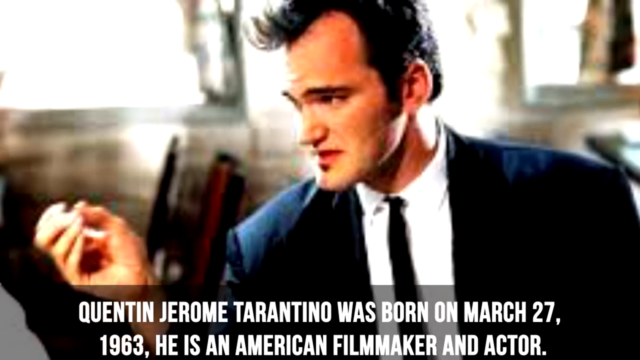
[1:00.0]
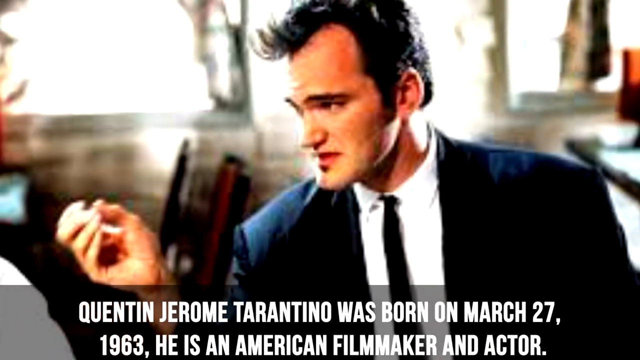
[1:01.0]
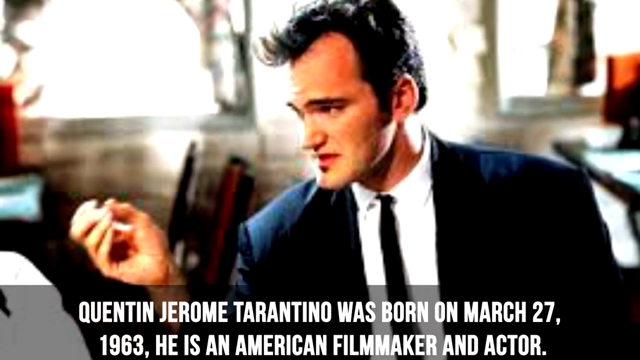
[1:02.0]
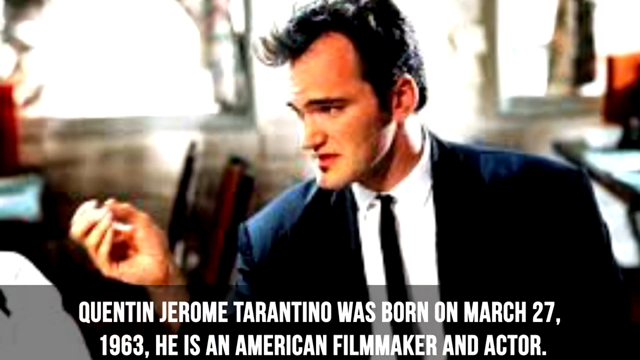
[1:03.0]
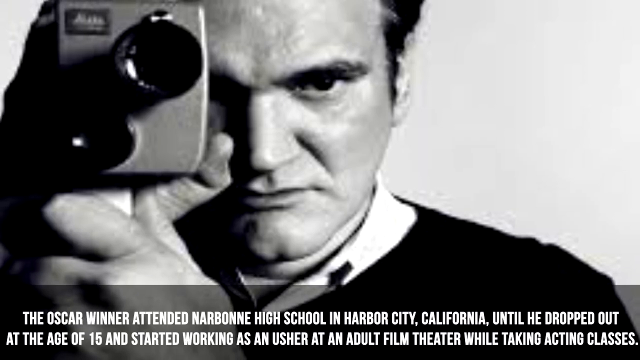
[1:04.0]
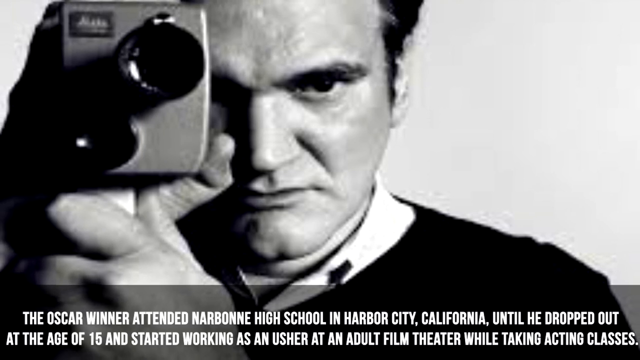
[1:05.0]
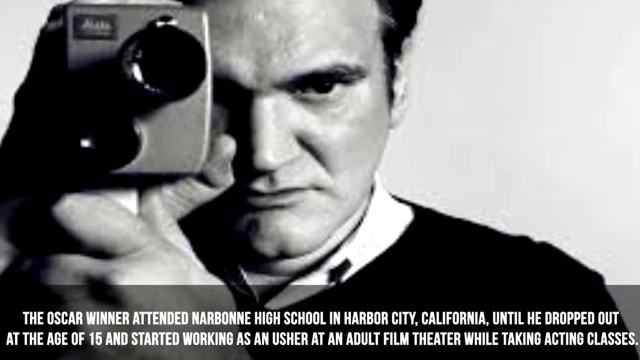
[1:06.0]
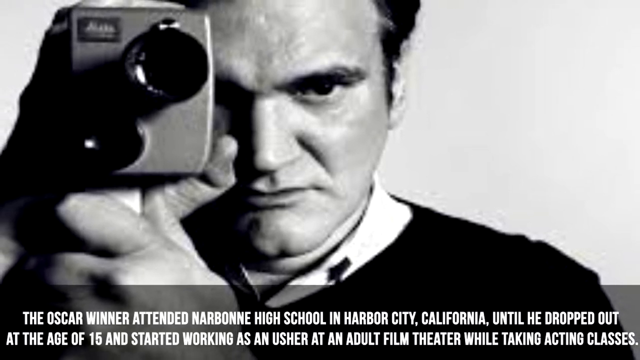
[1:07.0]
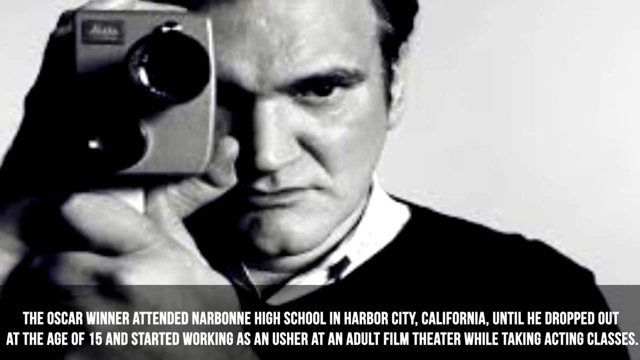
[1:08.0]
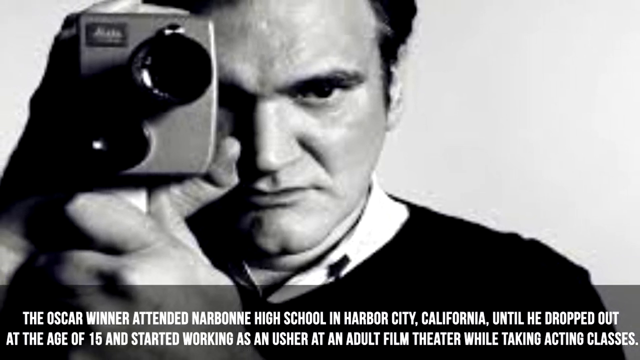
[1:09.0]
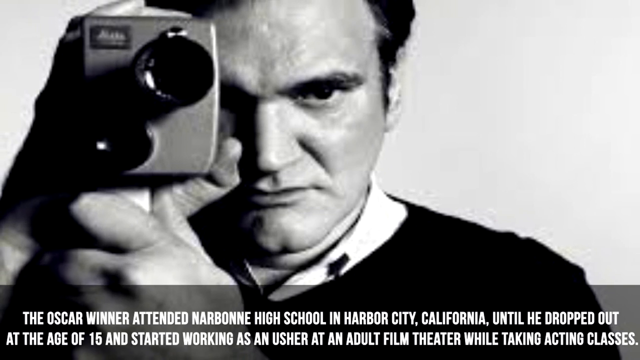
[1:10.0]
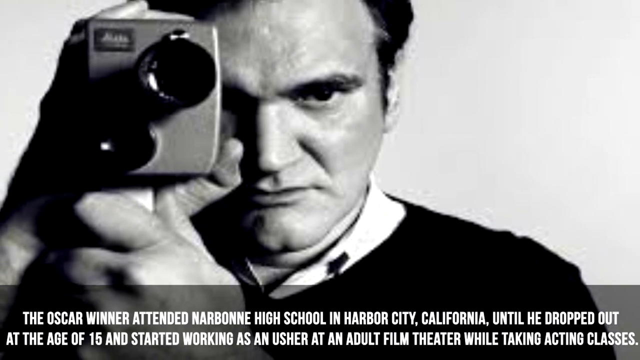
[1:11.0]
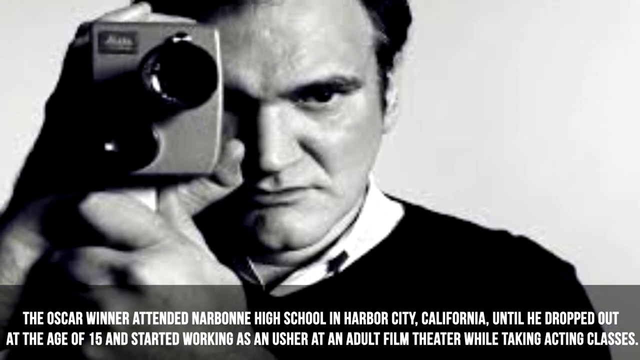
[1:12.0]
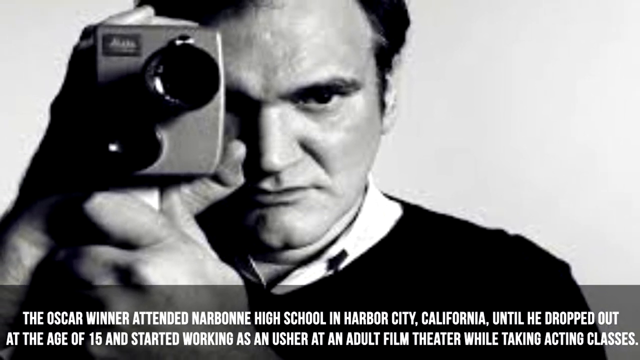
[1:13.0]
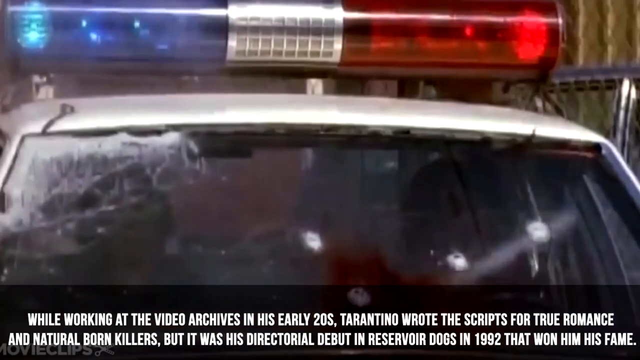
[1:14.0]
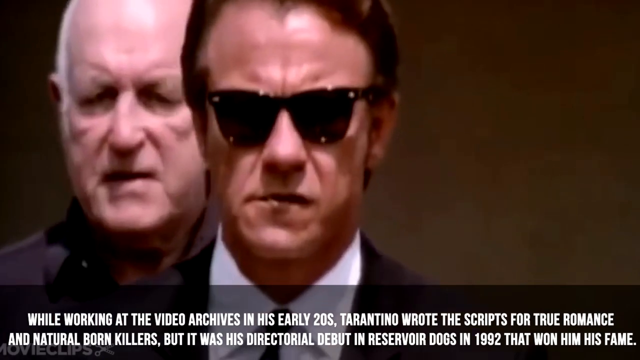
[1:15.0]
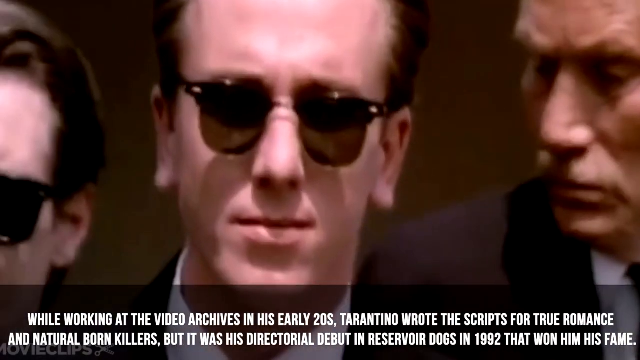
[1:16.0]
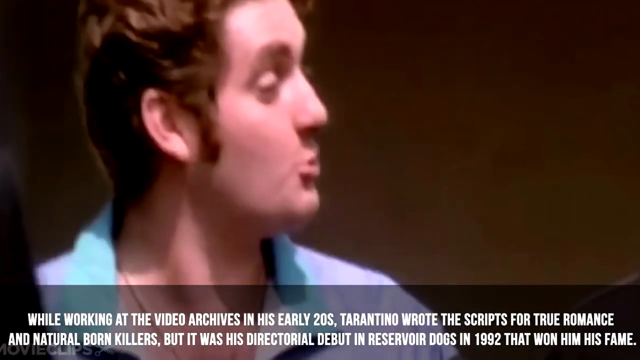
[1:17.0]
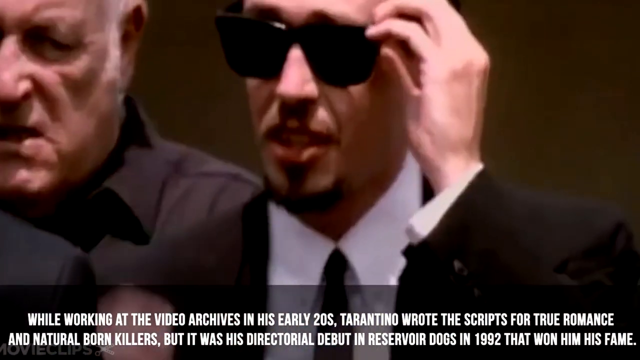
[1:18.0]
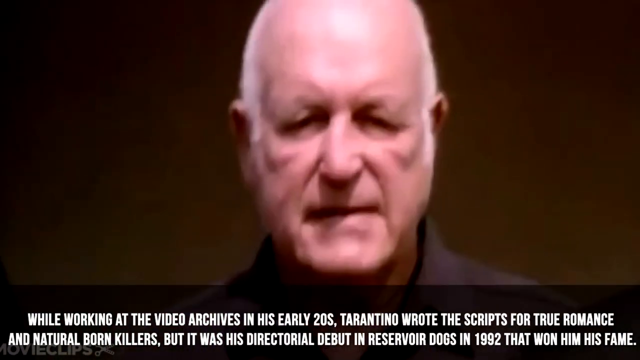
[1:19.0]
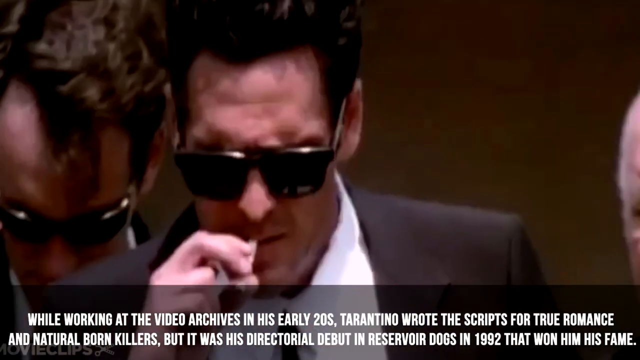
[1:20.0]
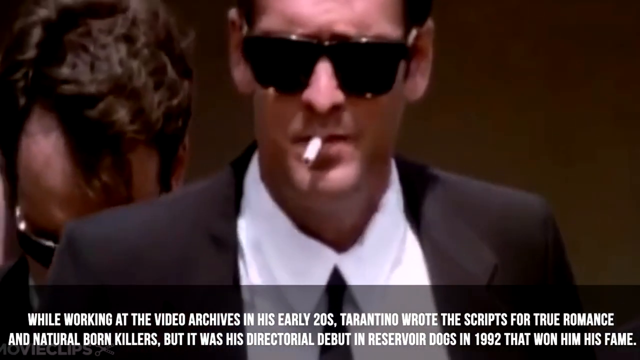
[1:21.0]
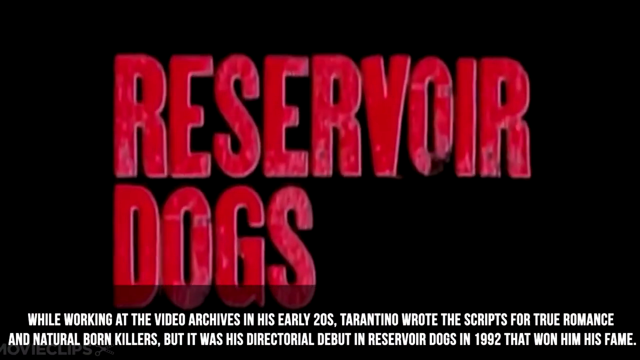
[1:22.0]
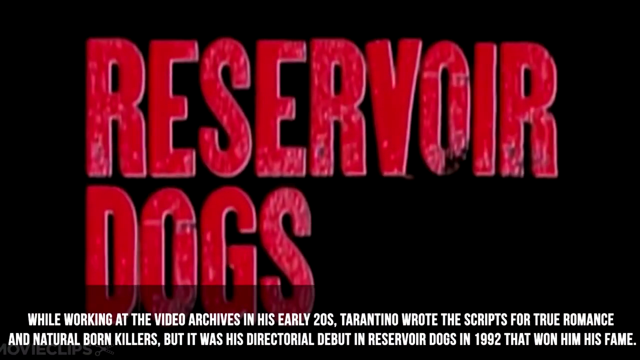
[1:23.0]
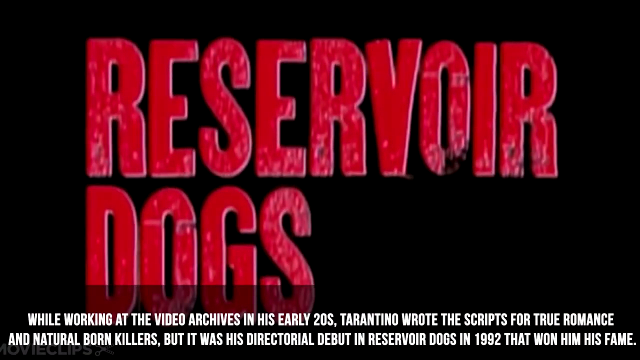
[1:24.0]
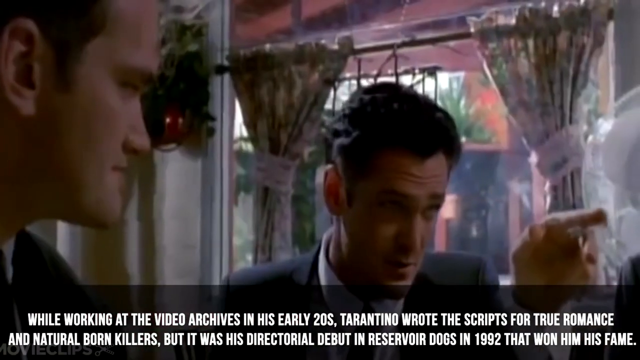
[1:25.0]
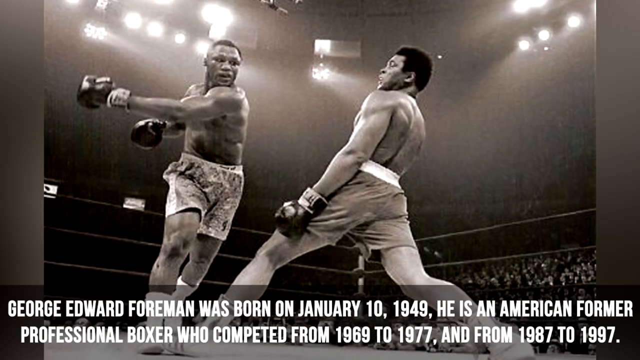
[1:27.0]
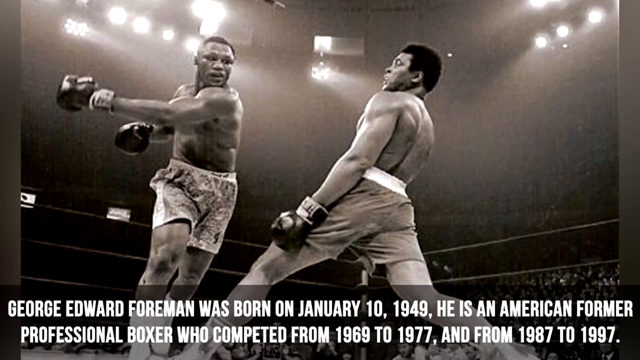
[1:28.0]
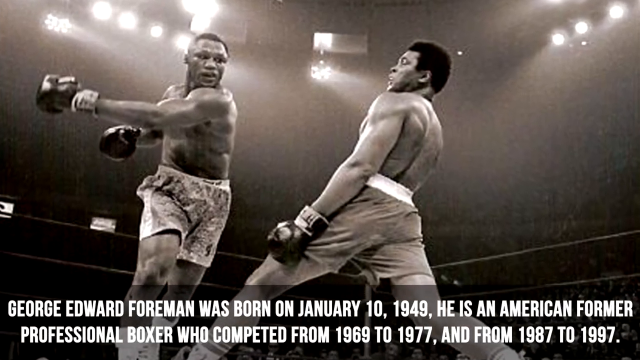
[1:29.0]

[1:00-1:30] Footage of Quentin Tarantino, either behind-the-scenes or from one of his movies, shows him in a suit, kind of looking toward his left. The bottom text says he was born March 27th, 1963, and is an American filmmaker and actor. The video cuts to a black-and-white photo of him looking very intently at the camera while holding up an old 8mm, or maybe 16mm, film camera. The text says he was an Oscar winner, attended a high school in California, dropped out at the age of 15 and started working in an adult theater while taking acting classes; that while working at the video archives in his early 20s he wrote the script for True Romance and another script; and that his directorial debut, Reservoir Dogs in 1992, won him fame. A very quick clip of Reservoir Dogs appears. Then "George Foreman" appears in big text on a black background, followed by footage of George Foreman in a boxing match with another man, presumably African American.